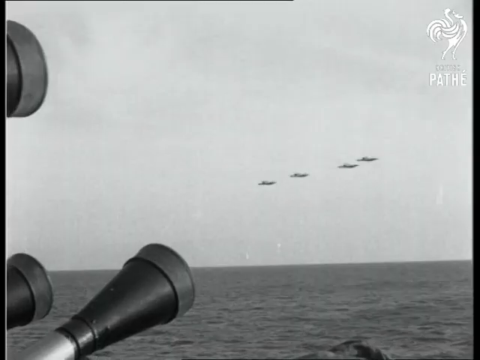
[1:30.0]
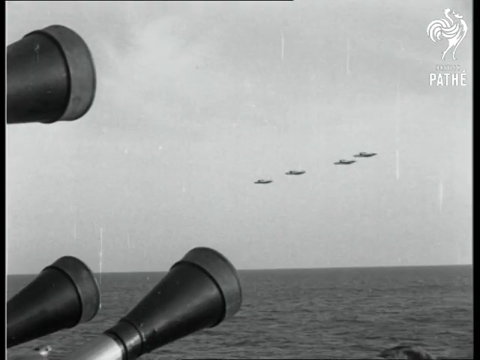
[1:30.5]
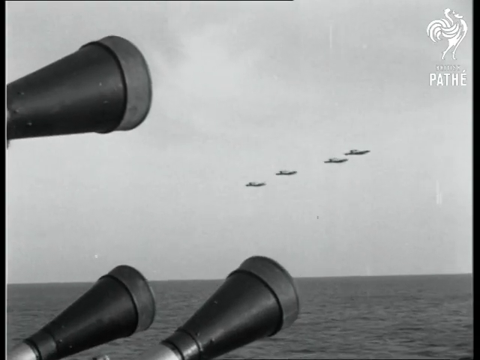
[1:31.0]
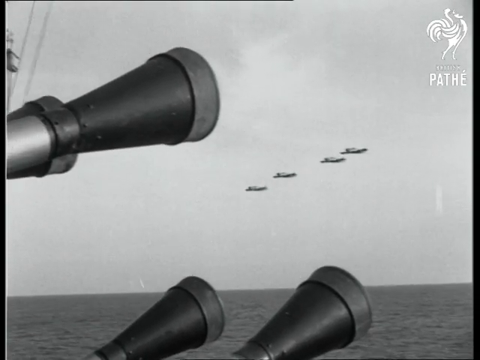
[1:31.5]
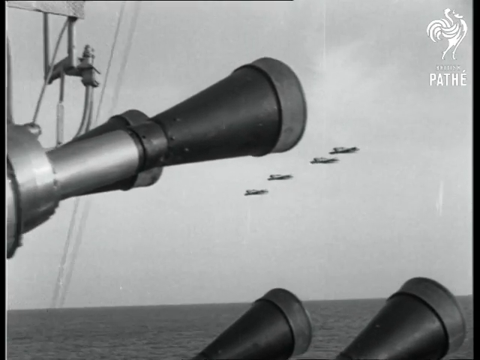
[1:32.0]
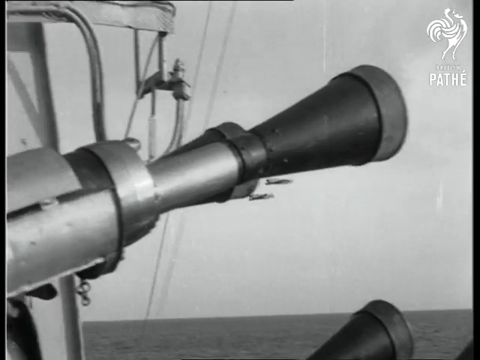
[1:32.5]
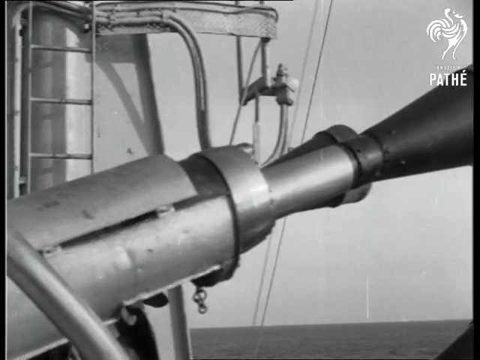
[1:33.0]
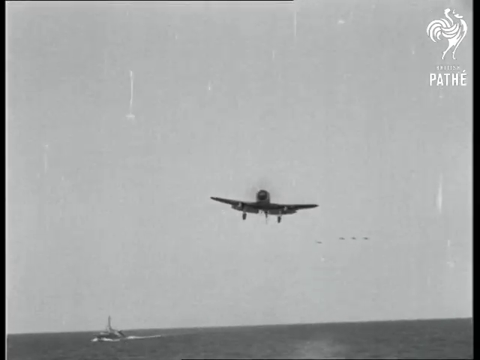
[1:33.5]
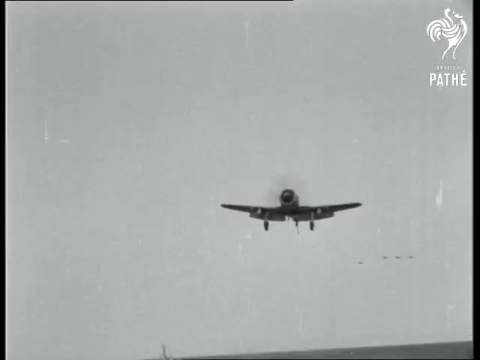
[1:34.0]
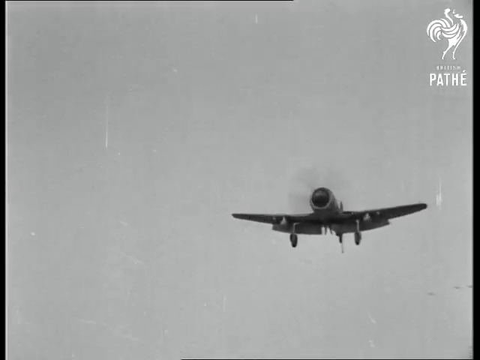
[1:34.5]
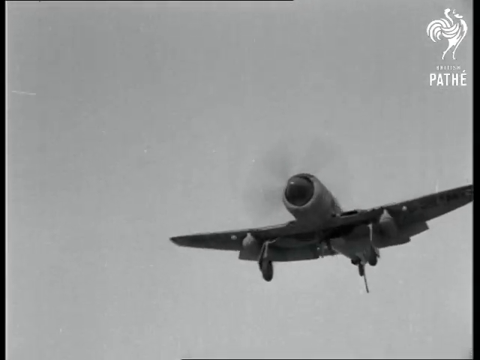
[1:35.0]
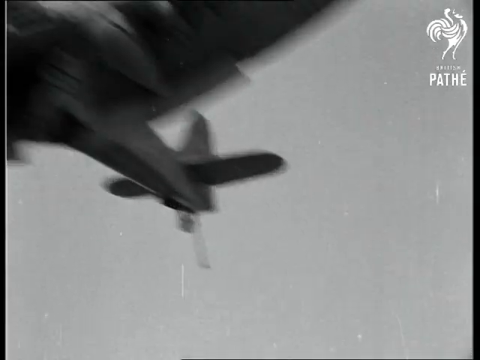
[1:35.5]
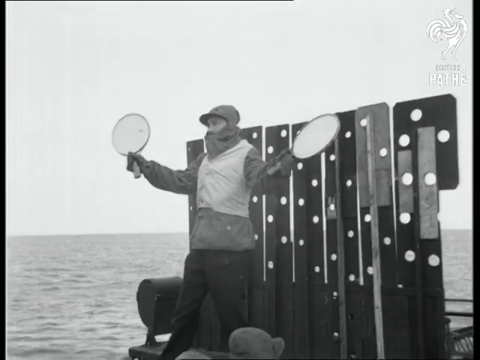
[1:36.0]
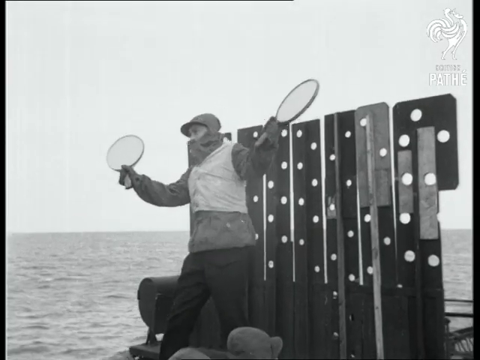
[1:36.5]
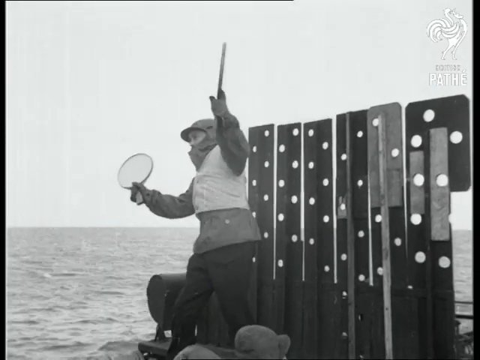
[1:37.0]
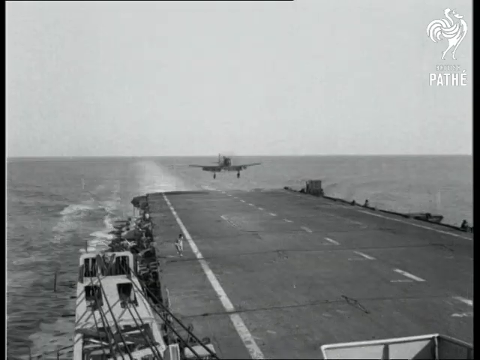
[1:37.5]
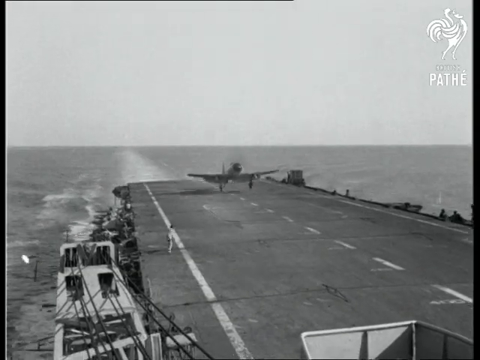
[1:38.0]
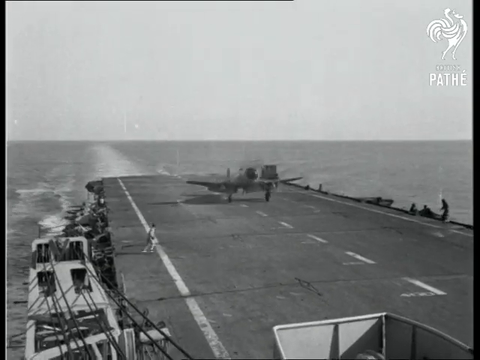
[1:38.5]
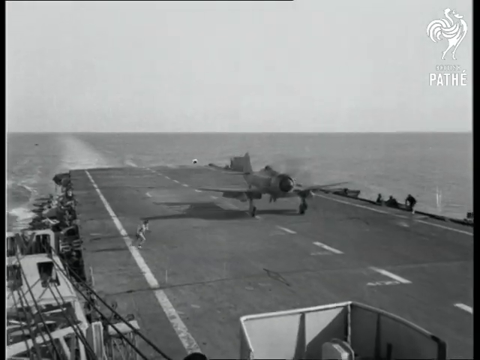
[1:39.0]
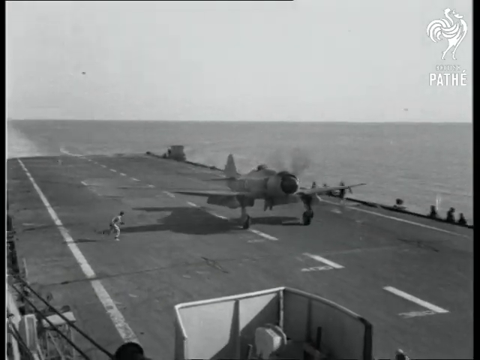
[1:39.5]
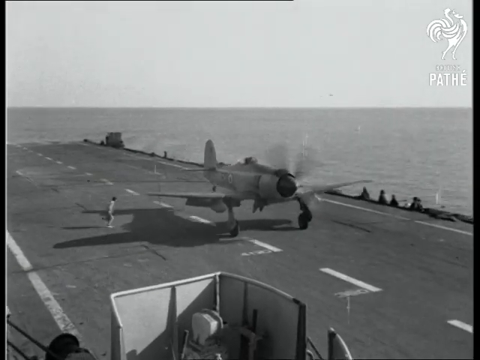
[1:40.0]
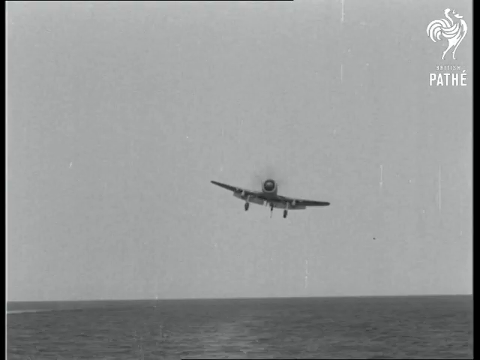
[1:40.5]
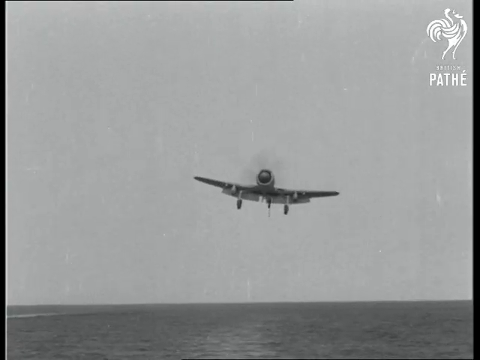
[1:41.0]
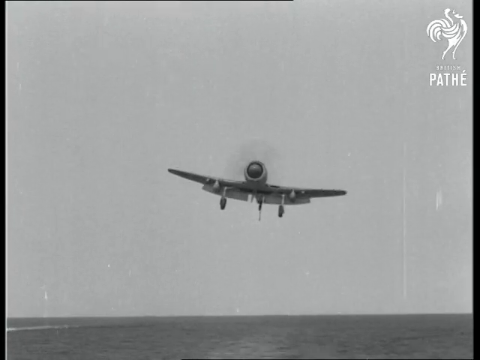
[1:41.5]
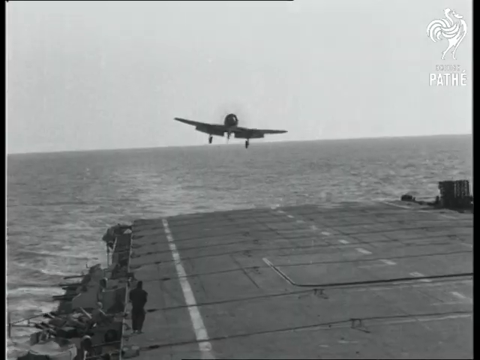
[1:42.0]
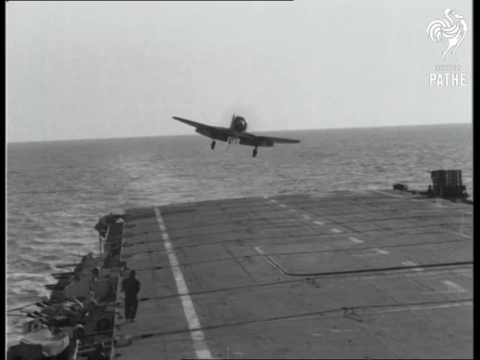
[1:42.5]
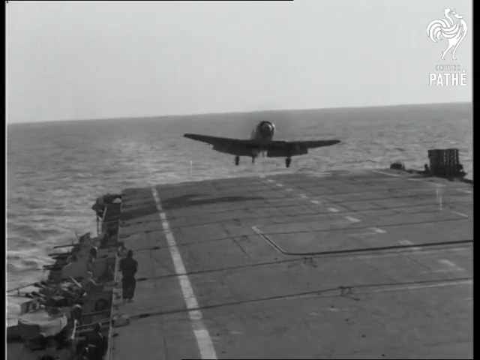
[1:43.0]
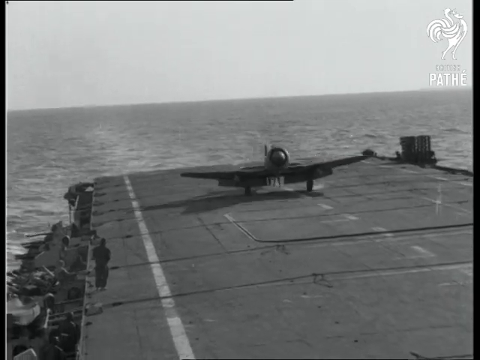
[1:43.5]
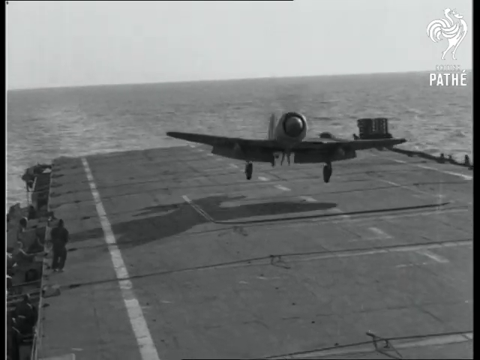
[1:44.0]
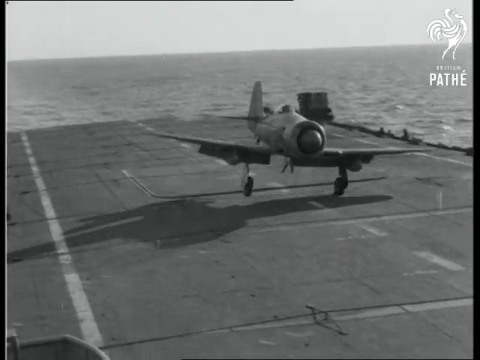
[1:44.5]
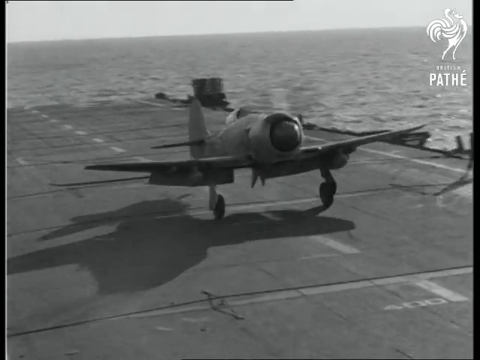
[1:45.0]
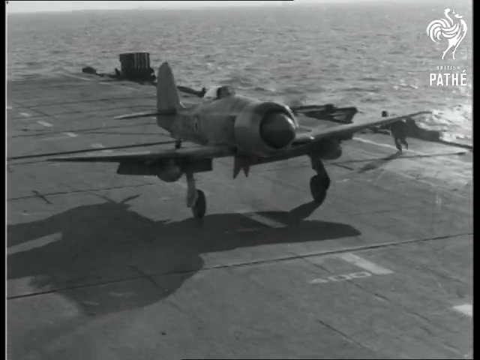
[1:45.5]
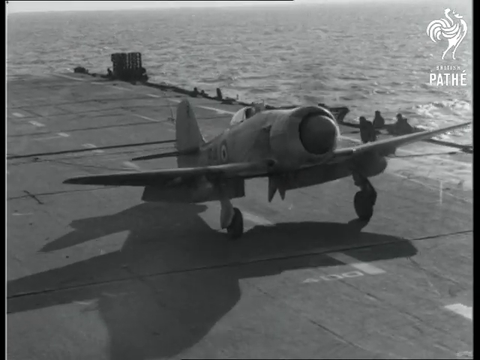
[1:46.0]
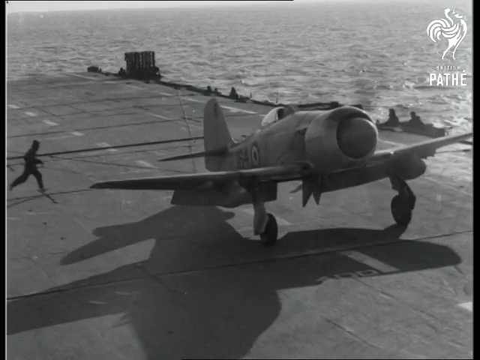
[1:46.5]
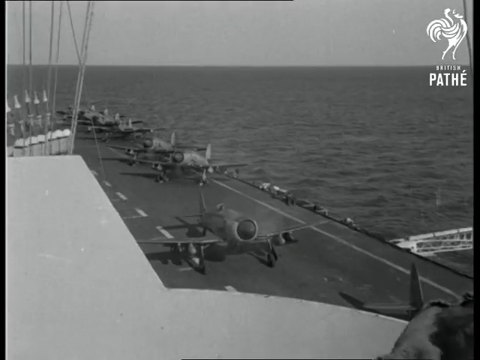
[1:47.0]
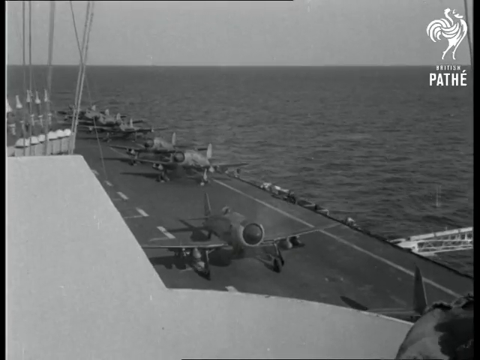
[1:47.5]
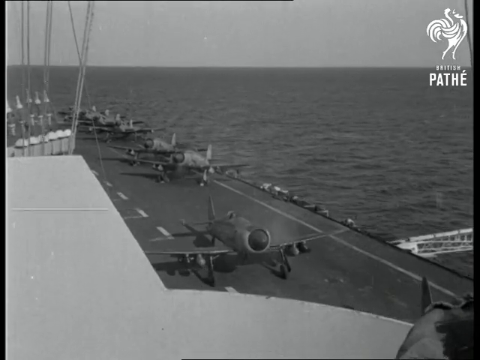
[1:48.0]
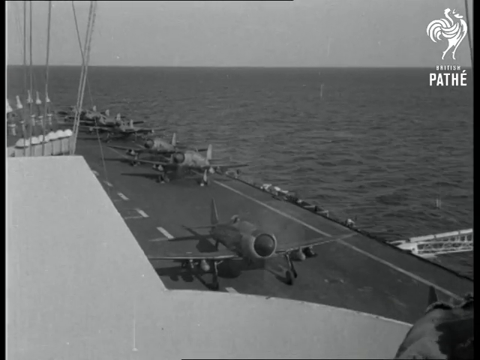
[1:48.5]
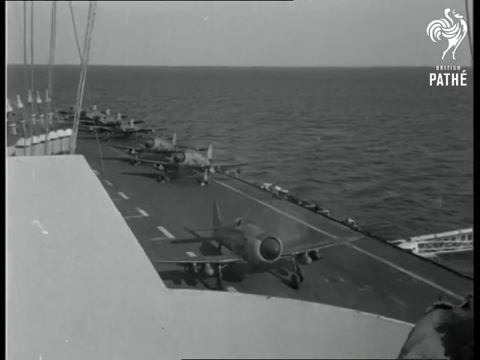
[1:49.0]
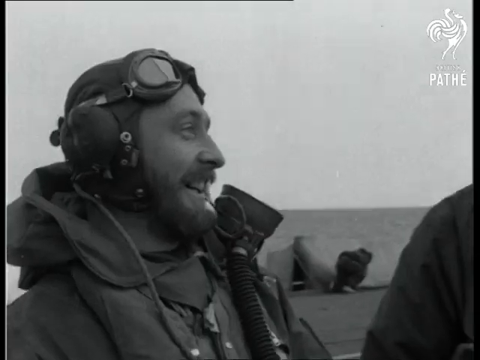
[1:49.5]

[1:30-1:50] Seen from the deck of a ship, four planes fly at low altitude against a cloudy sky. The planes cross over the ship, and one comes in for a landing toward the viewer. A man waves white paddles to guide it as it hits the center line, is caught by its hook and comes to a complete stop. Two planes land as soldiers help them, and various landed planes are lined up along the side. The image changes to a soldier on the deck helping the planes land; he wears a hat with flaps, is unshaven, and has a big smile.